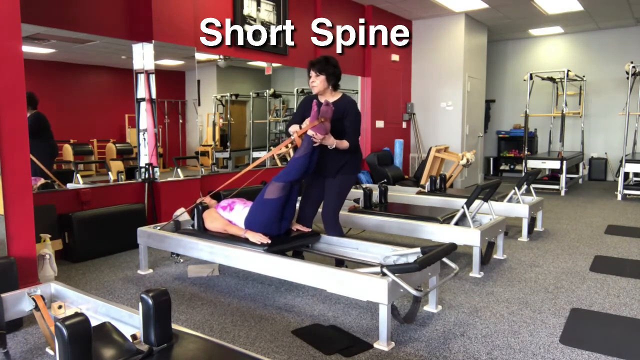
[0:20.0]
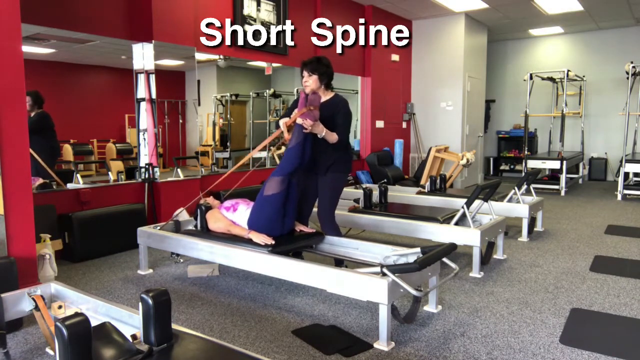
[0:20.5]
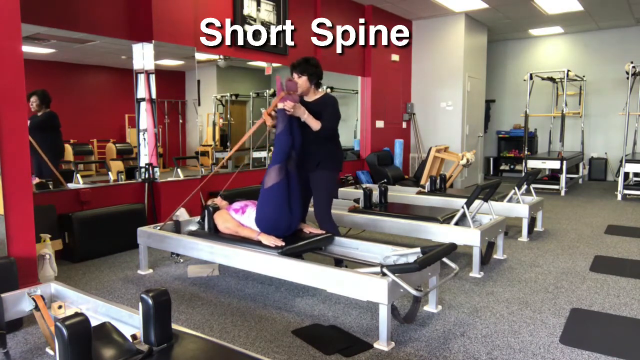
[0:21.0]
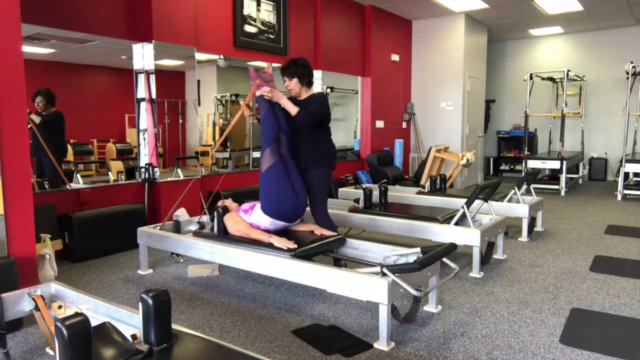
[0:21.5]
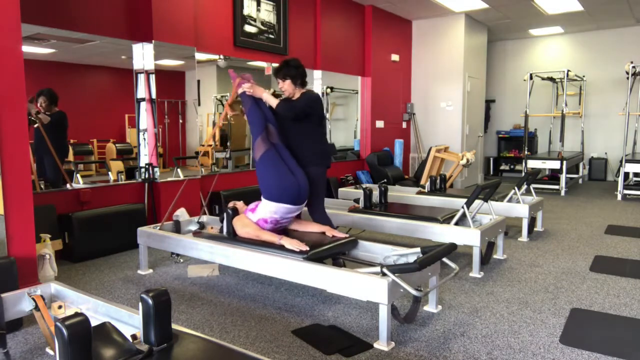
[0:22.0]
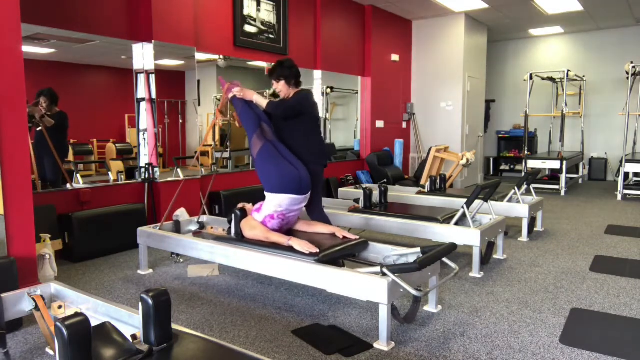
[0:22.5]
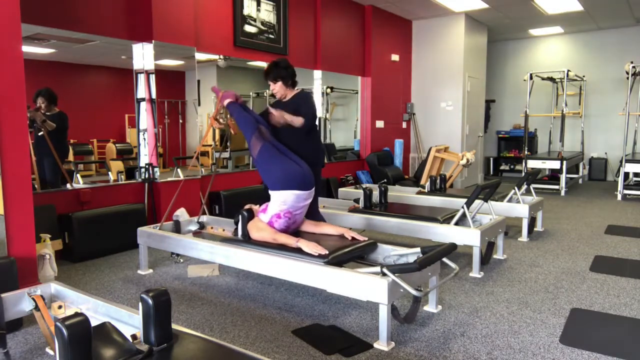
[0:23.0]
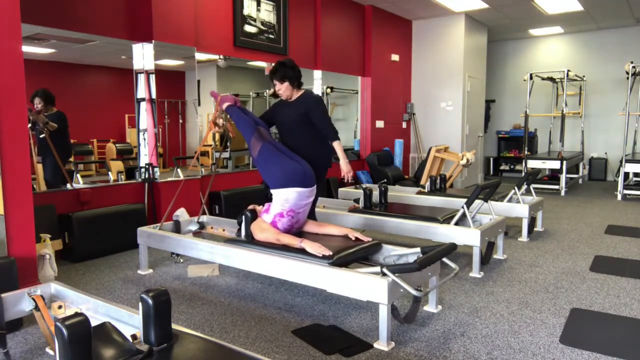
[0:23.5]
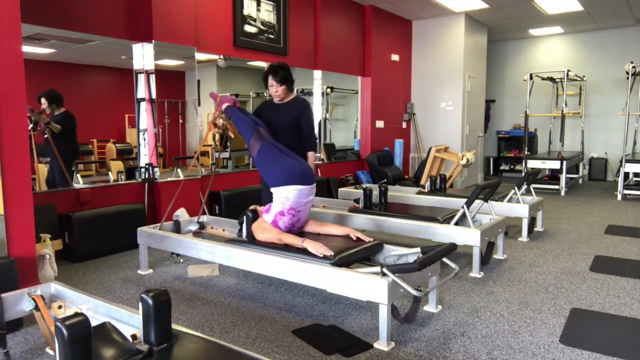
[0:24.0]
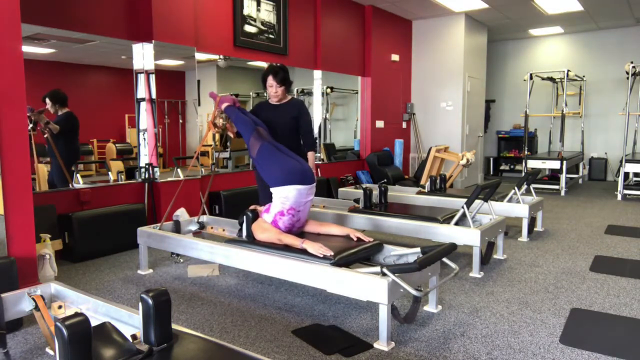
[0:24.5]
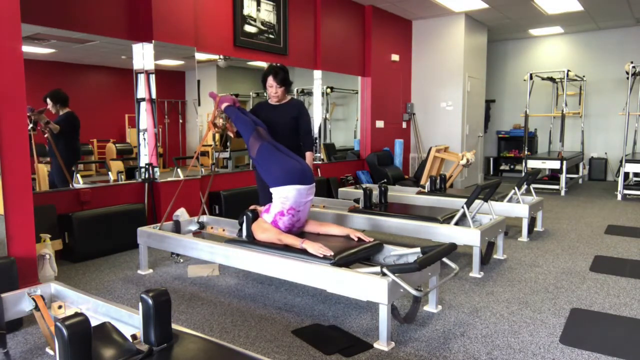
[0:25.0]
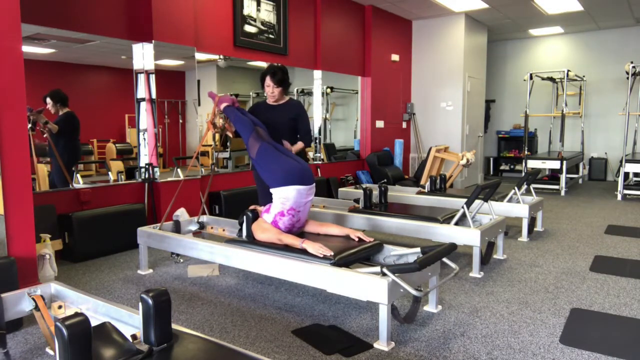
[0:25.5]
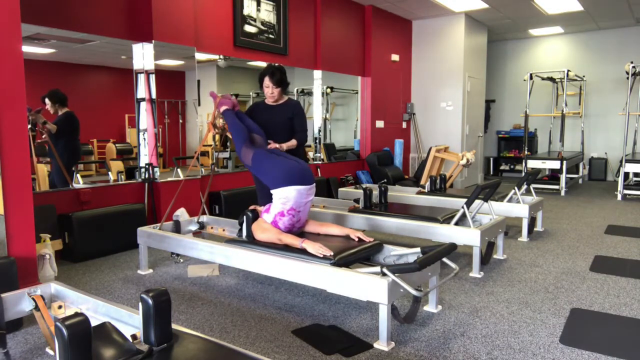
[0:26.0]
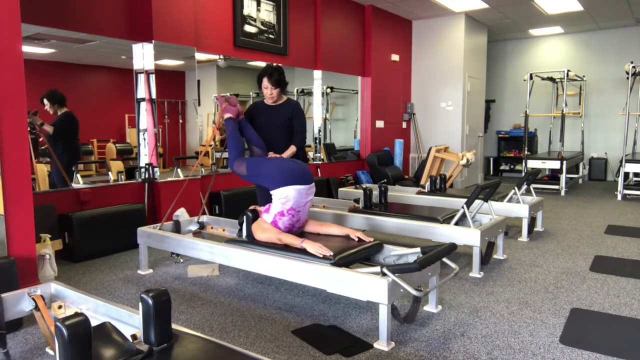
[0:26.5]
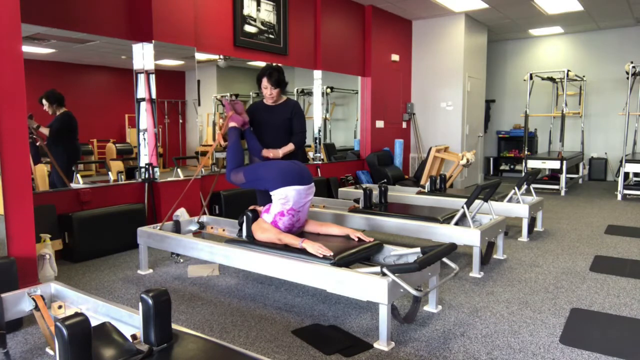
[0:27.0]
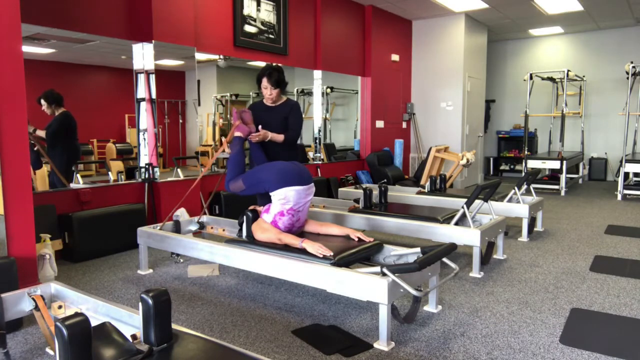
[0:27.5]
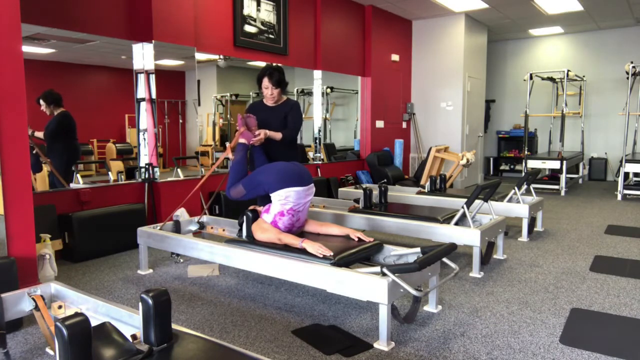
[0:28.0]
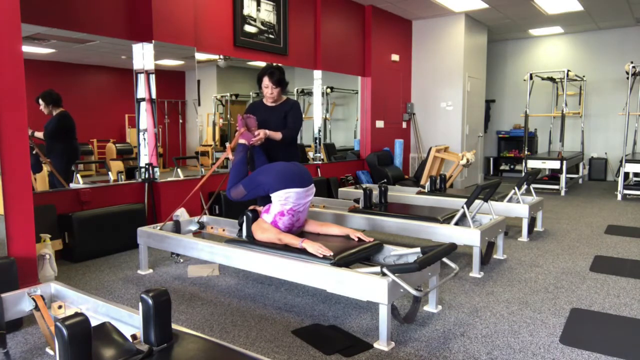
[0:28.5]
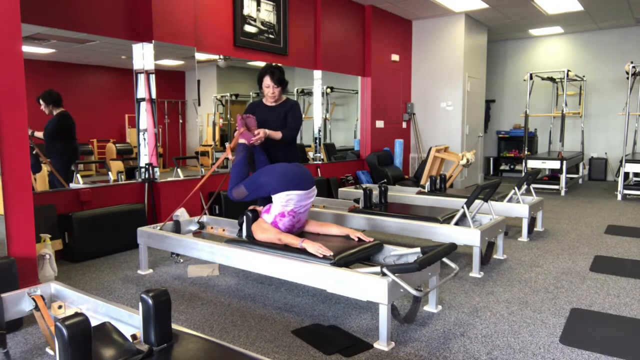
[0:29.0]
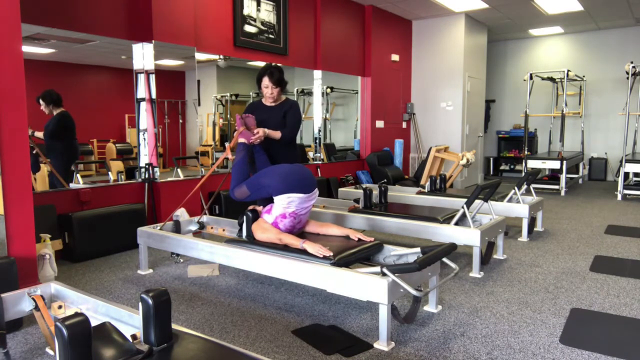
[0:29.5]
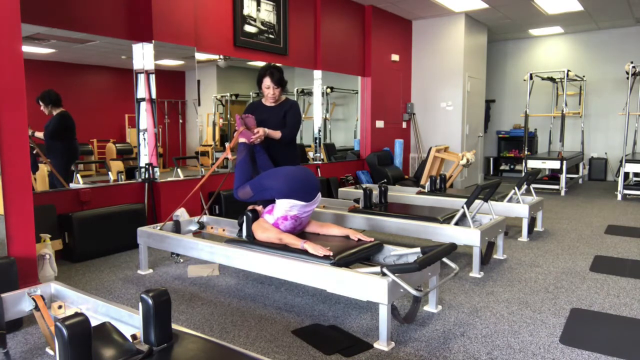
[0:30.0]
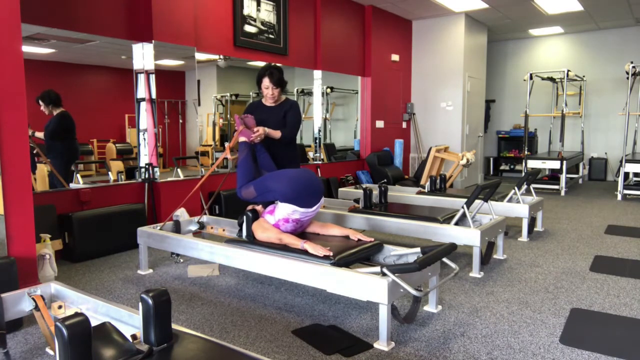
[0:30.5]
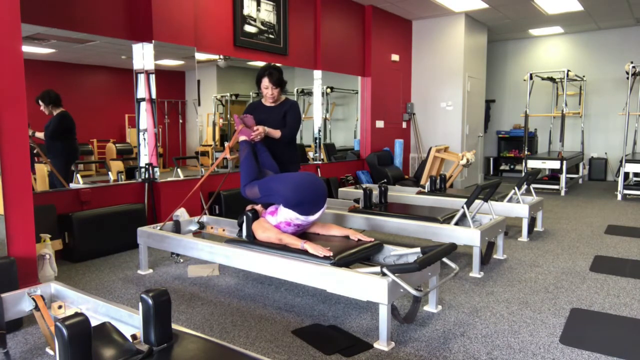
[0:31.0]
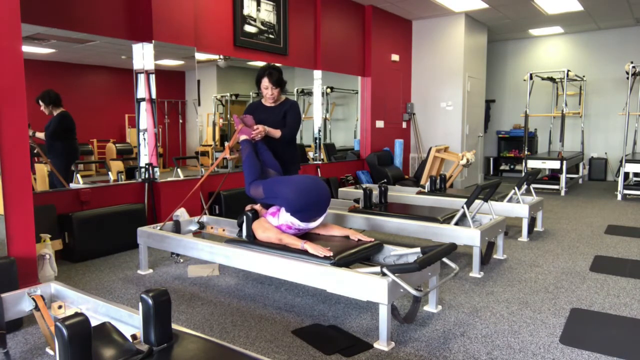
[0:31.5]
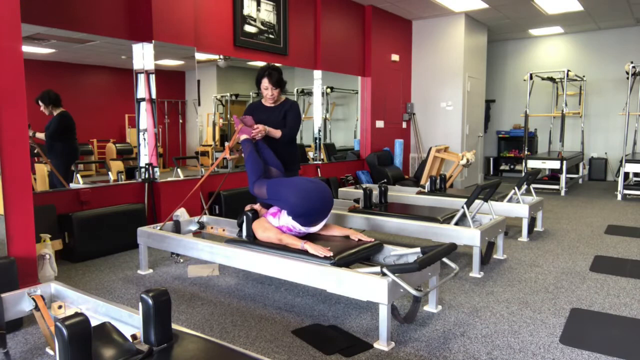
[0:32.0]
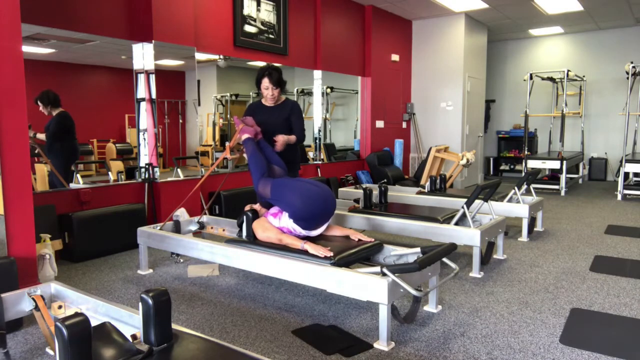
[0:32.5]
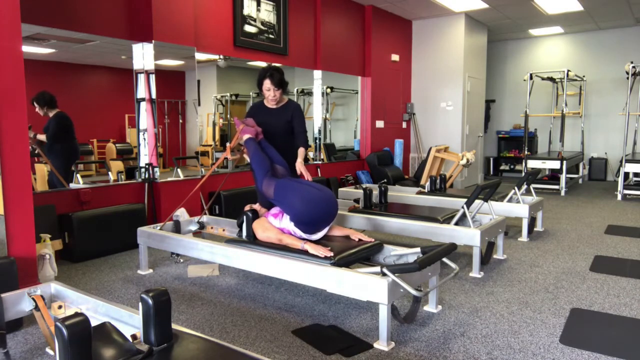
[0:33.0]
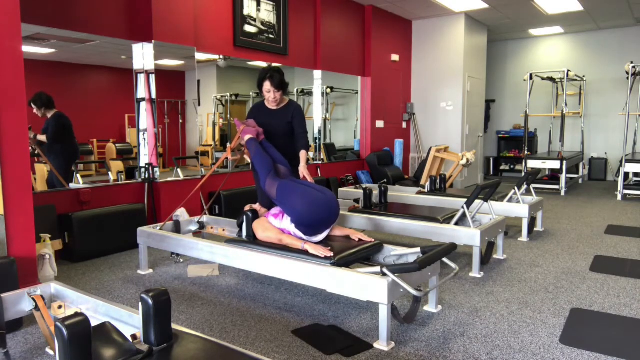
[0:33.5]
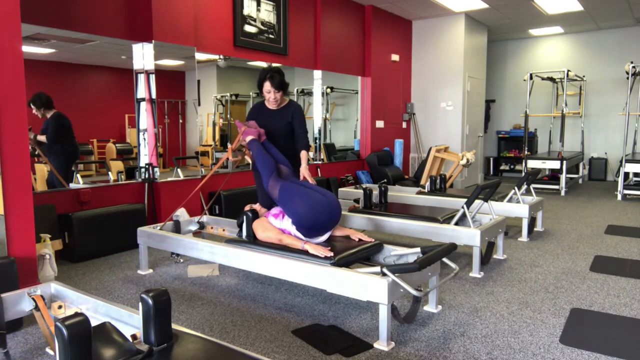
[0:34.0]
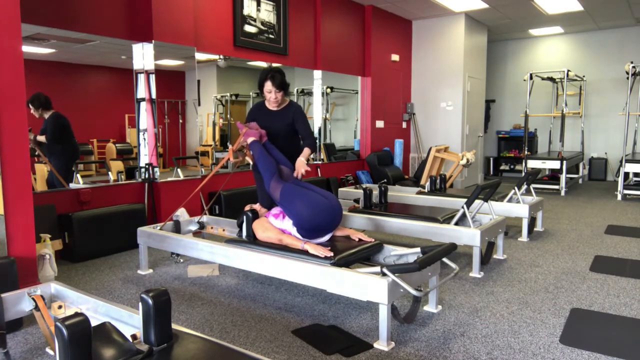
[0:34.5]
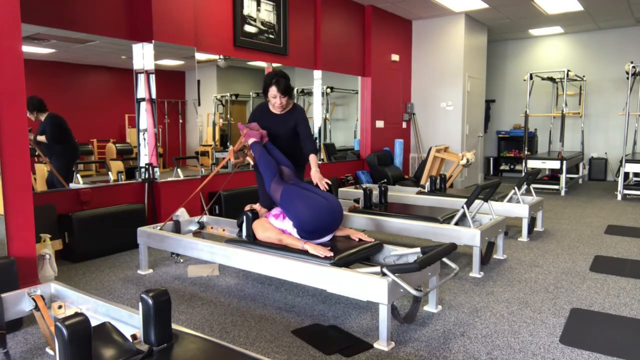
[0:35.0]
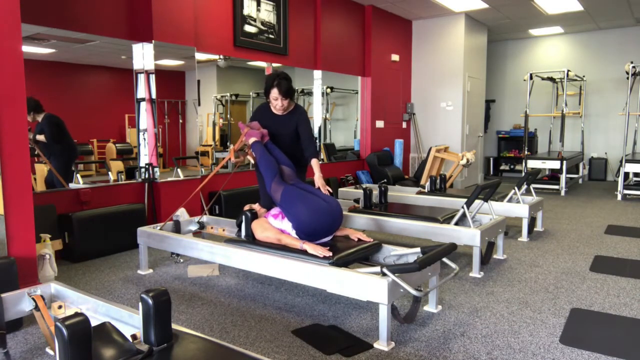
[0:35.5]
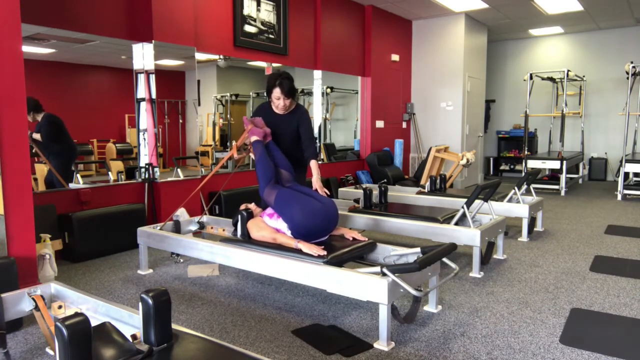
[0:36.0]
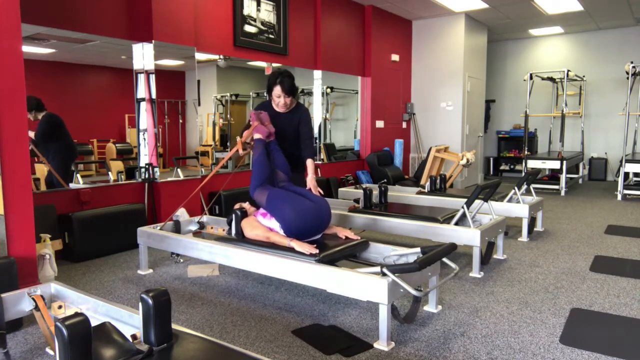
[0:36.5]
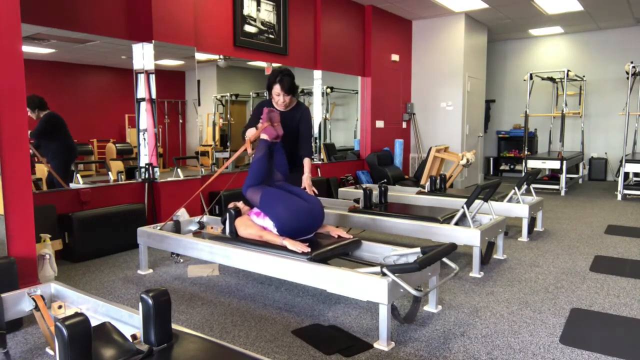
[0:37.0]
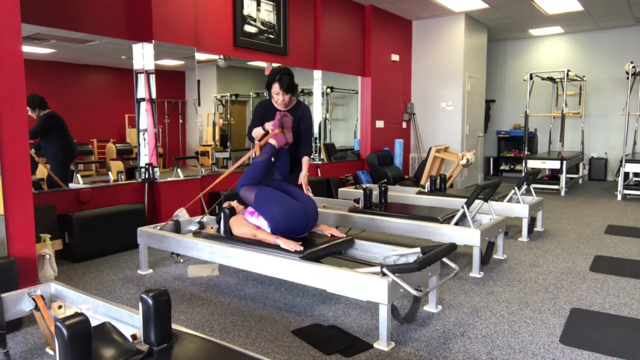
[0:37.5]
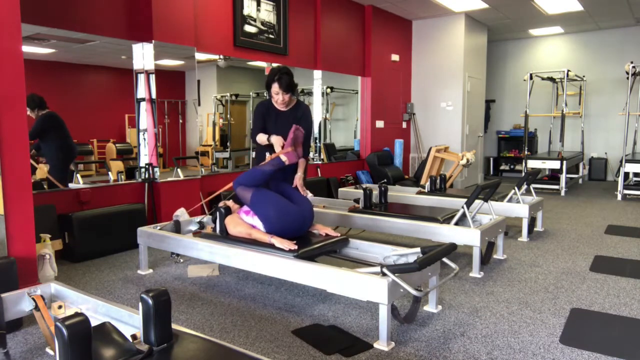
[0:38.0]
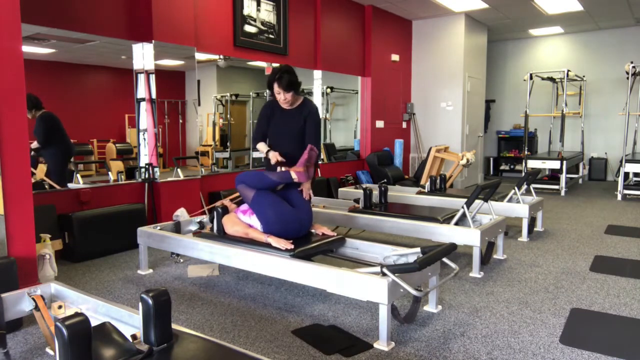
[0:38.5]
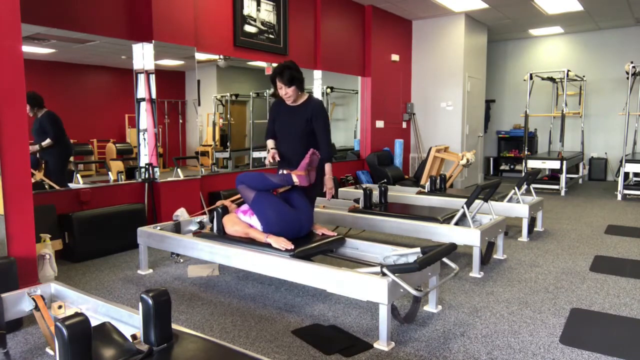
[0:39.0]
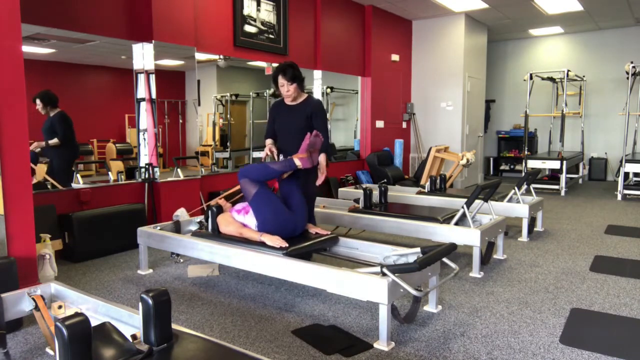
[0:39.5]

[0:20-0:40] The words "Short Spine" appear at the top of the screen in this Pilates Reformer tutorial, set in a studio where Pilates Reformer machines stand in a line in front of a red mirrored wall. A woman is on the Reformer in the foreground with a woman standing behind her. The woman on the Reformer has her feet extended in the loops of the bands. The standing woman helps stretch her legs up and back as her lower back lifts off the carriage and her legs stretch over her head. The standing woman helps hold her in position, then gently pushes her legs down so her knees bend as she lowers her lower back and buttocks back onto the carriage, and guides her back into position.